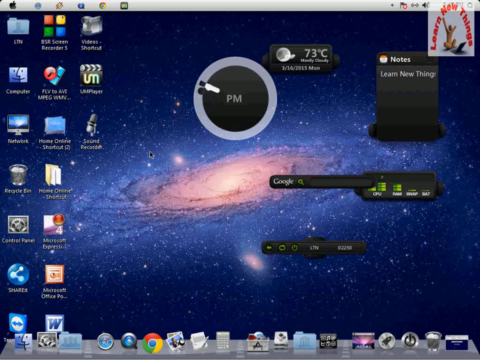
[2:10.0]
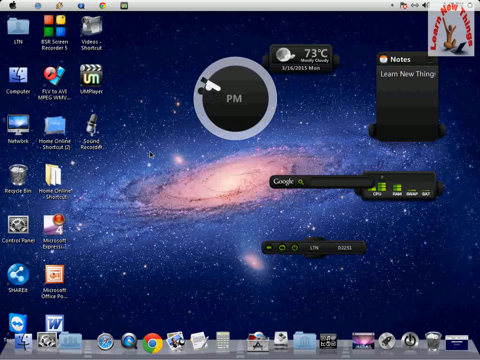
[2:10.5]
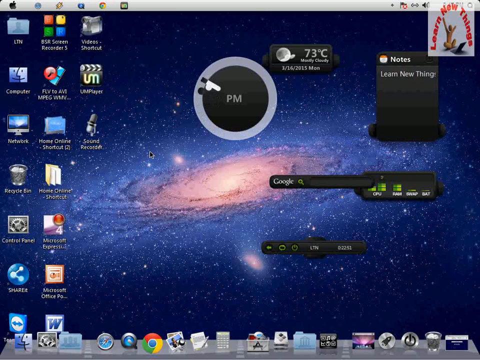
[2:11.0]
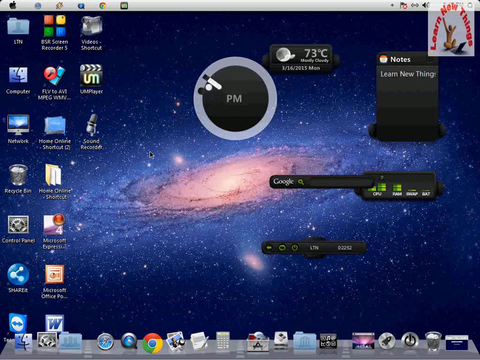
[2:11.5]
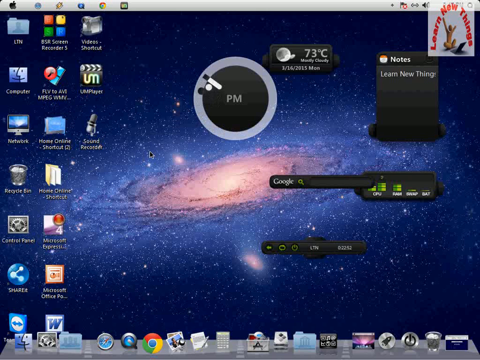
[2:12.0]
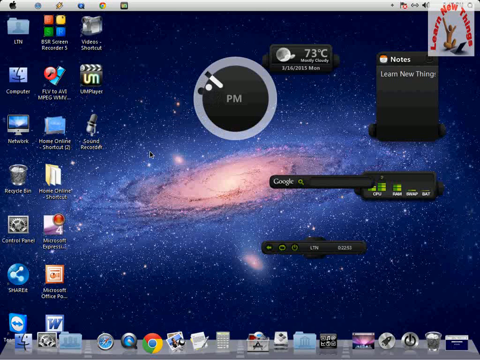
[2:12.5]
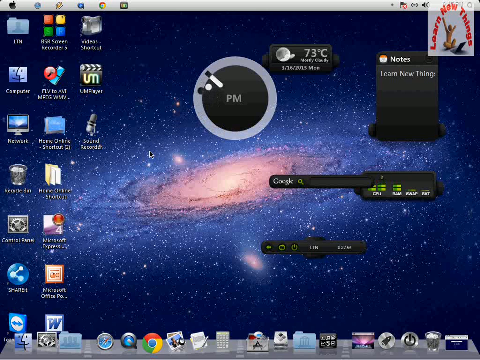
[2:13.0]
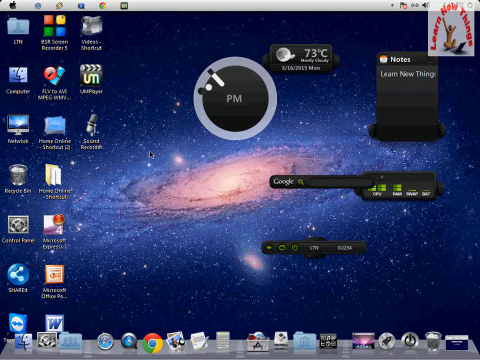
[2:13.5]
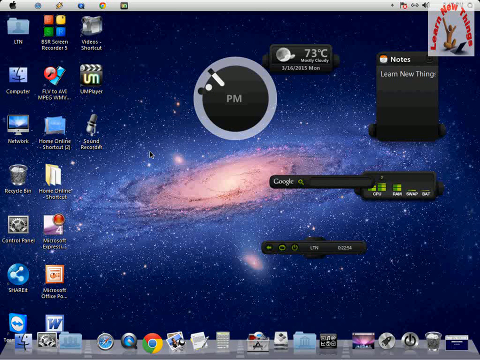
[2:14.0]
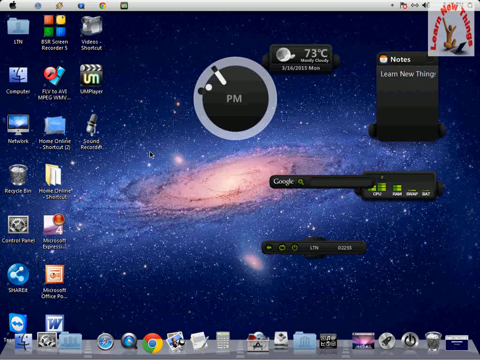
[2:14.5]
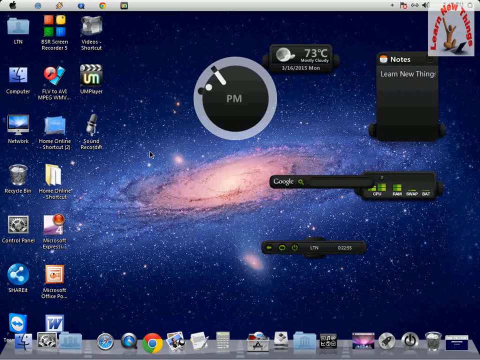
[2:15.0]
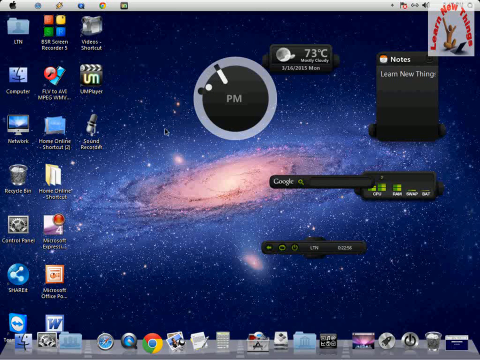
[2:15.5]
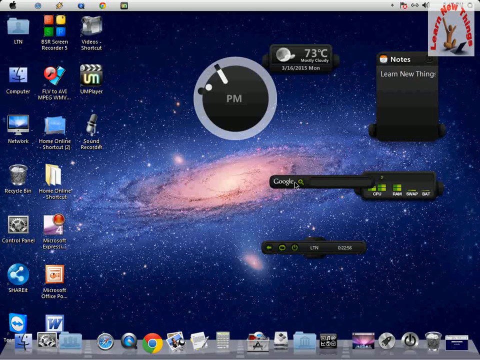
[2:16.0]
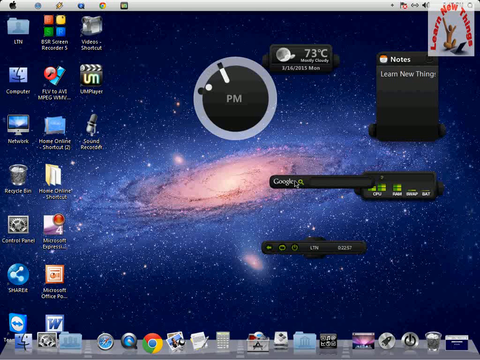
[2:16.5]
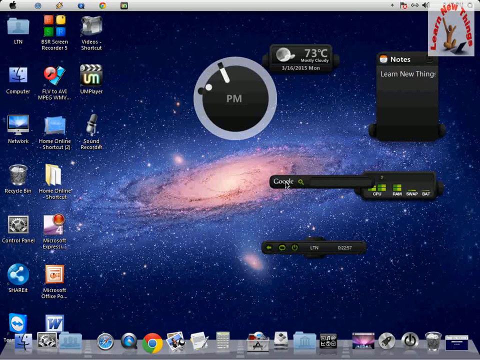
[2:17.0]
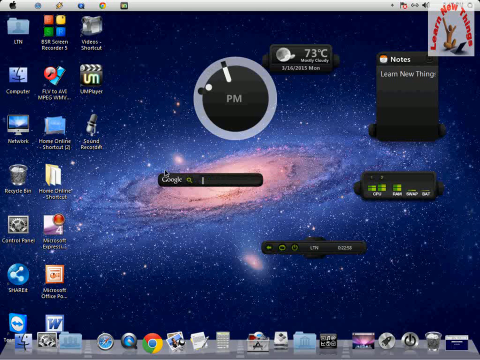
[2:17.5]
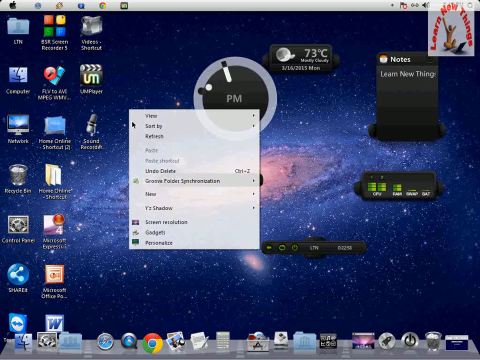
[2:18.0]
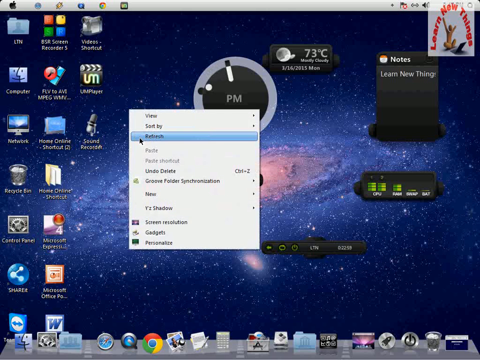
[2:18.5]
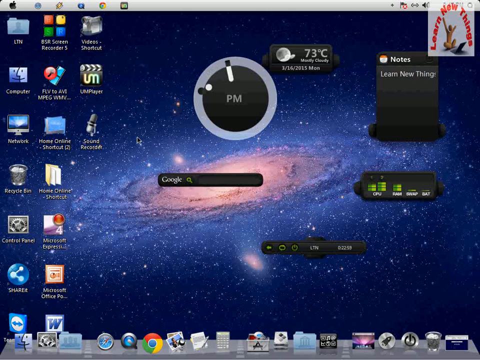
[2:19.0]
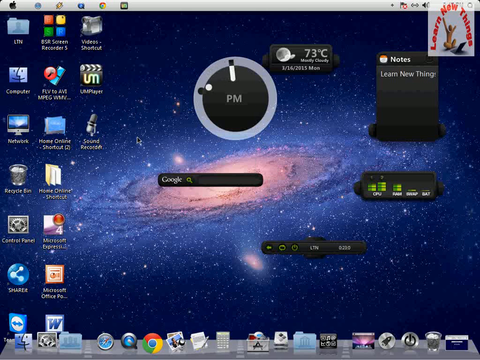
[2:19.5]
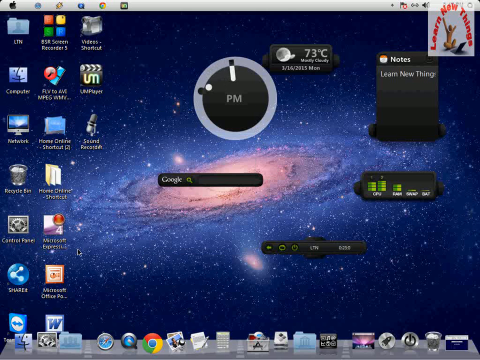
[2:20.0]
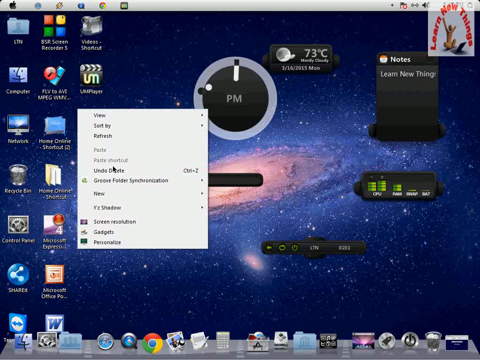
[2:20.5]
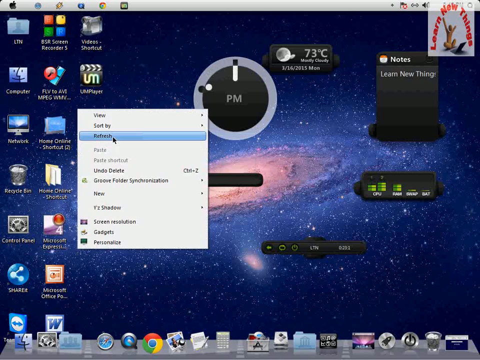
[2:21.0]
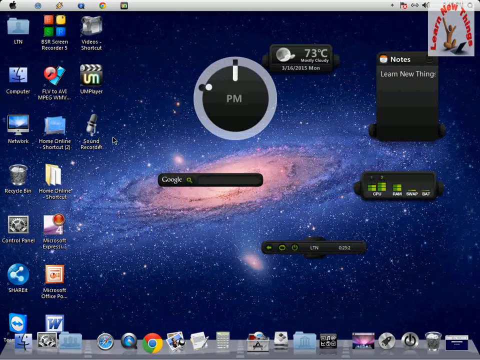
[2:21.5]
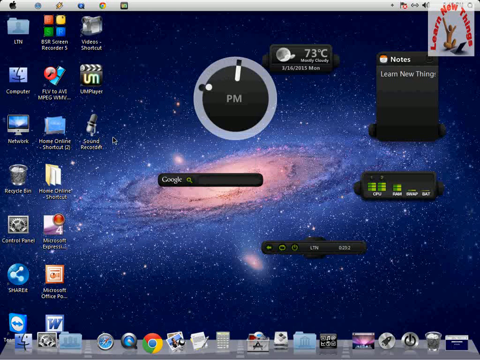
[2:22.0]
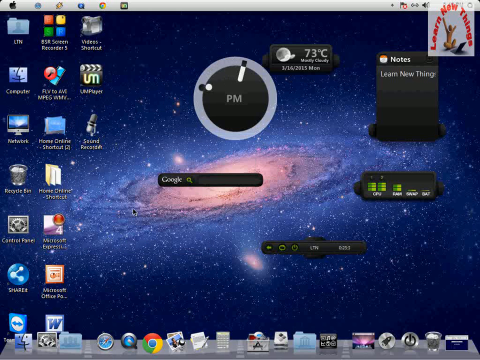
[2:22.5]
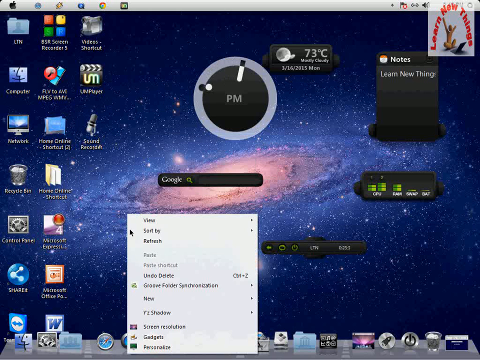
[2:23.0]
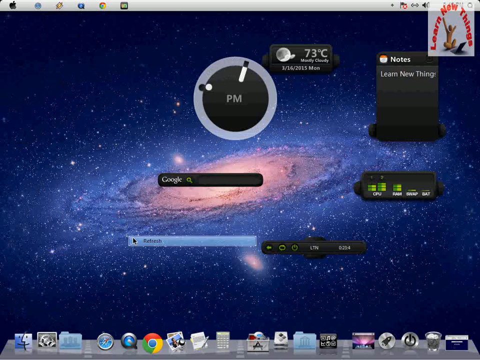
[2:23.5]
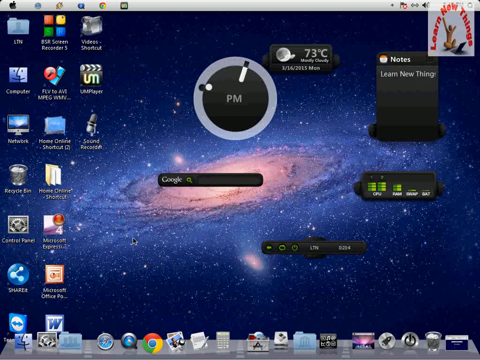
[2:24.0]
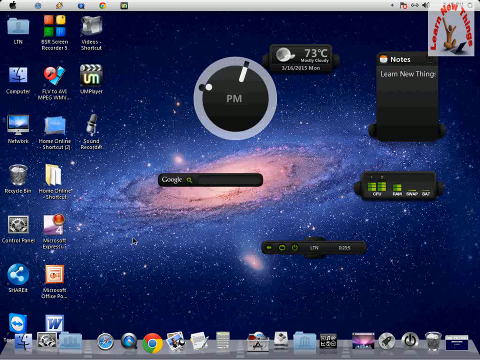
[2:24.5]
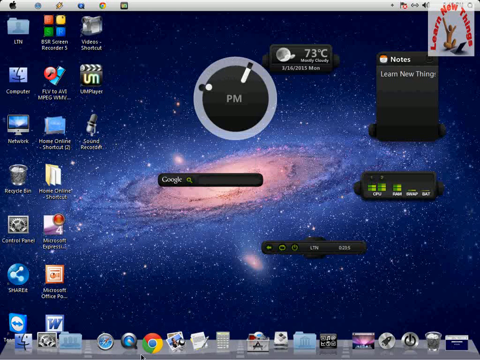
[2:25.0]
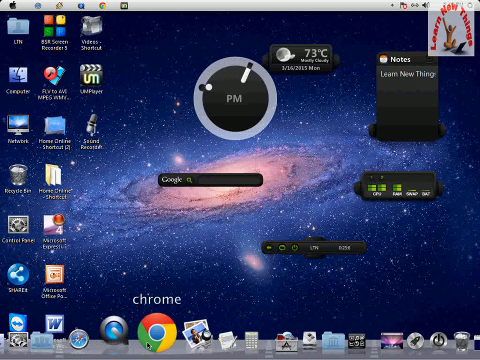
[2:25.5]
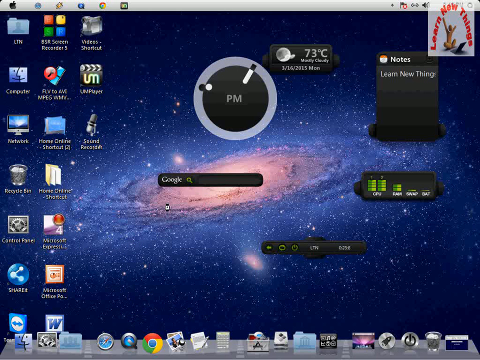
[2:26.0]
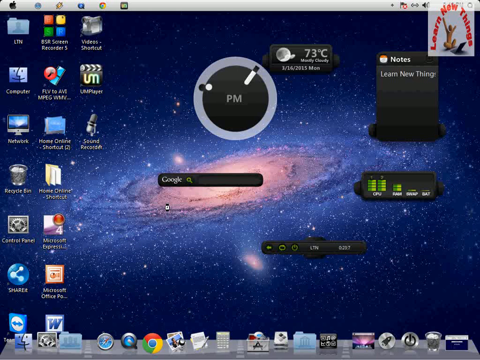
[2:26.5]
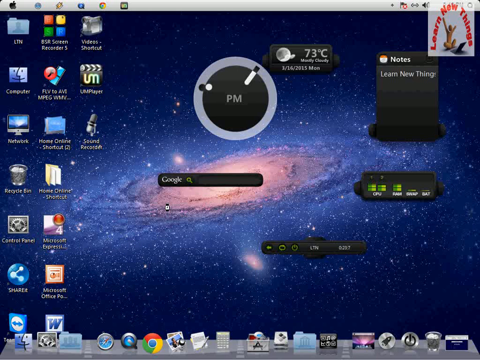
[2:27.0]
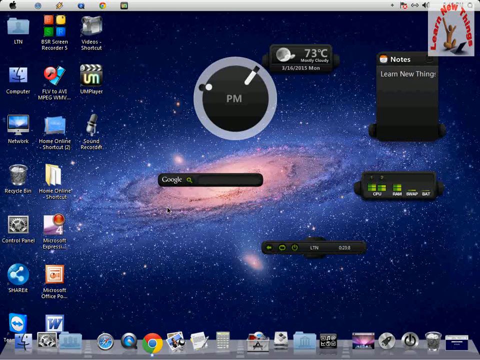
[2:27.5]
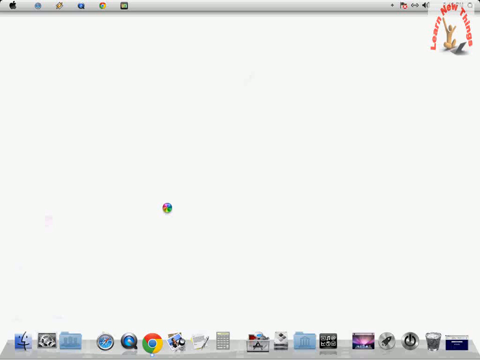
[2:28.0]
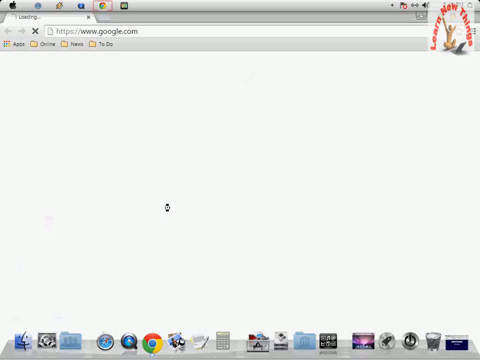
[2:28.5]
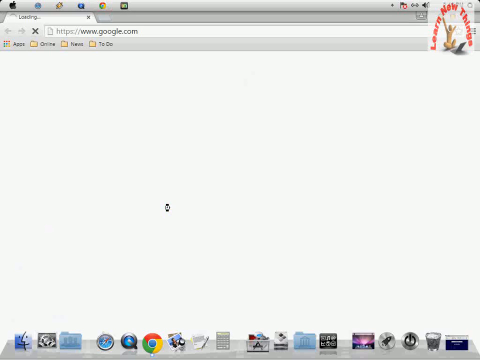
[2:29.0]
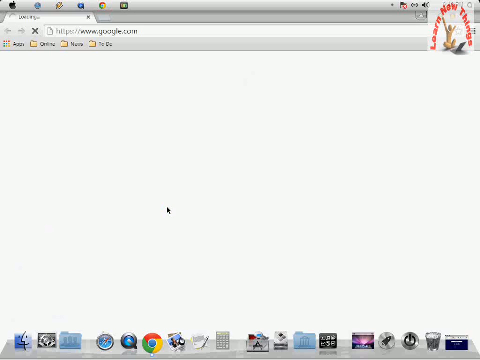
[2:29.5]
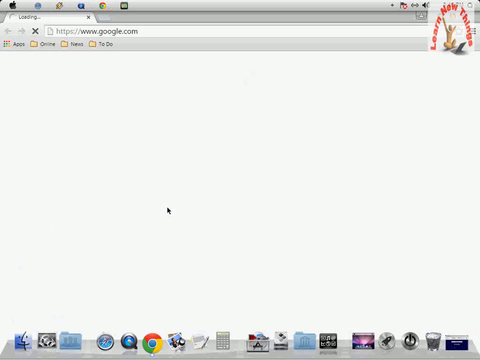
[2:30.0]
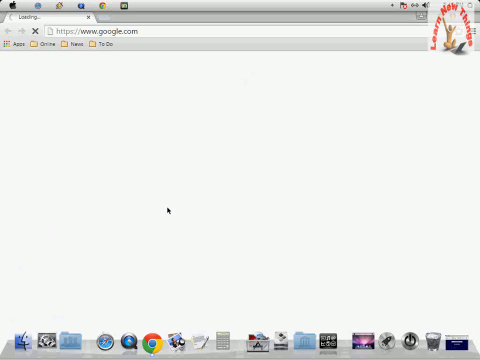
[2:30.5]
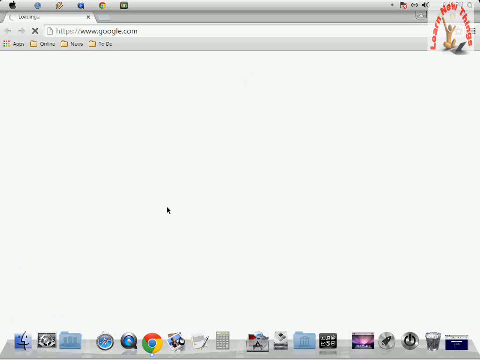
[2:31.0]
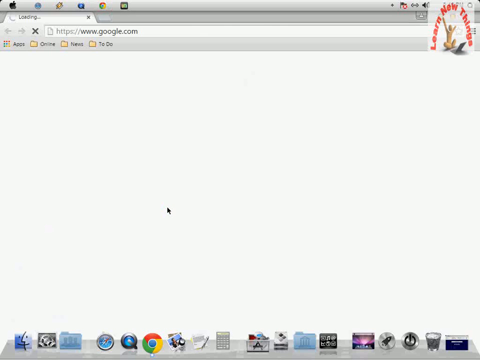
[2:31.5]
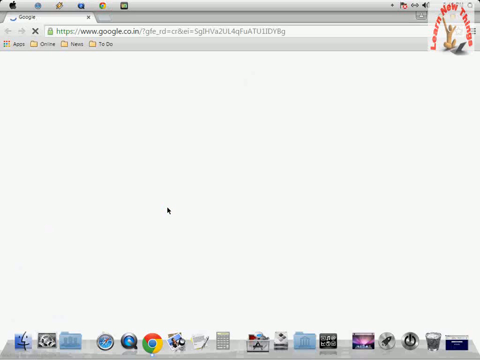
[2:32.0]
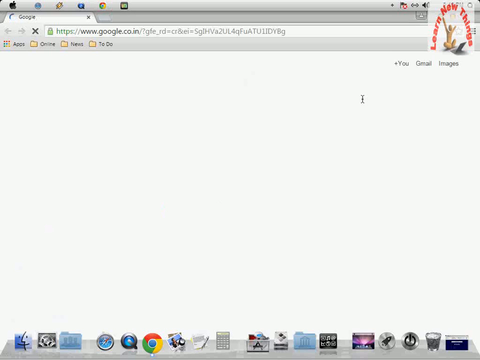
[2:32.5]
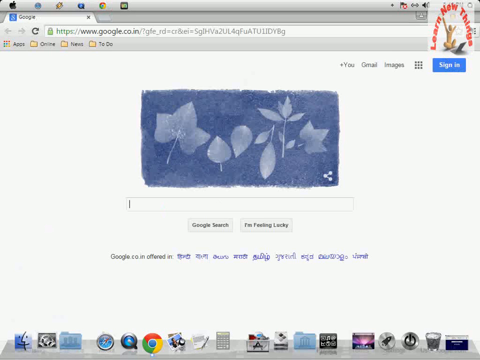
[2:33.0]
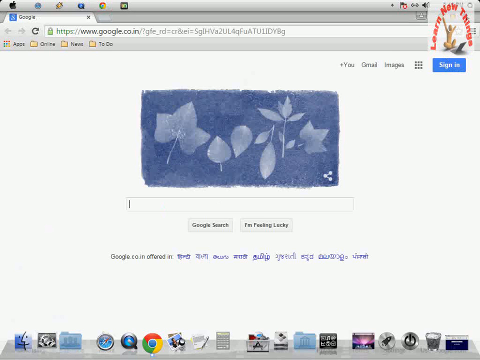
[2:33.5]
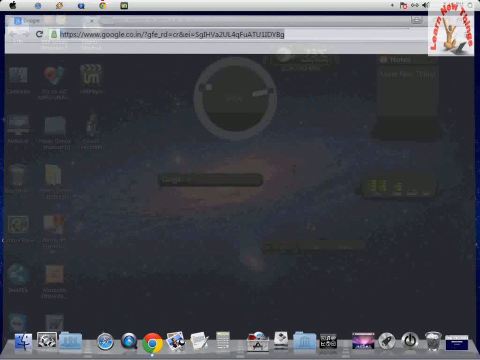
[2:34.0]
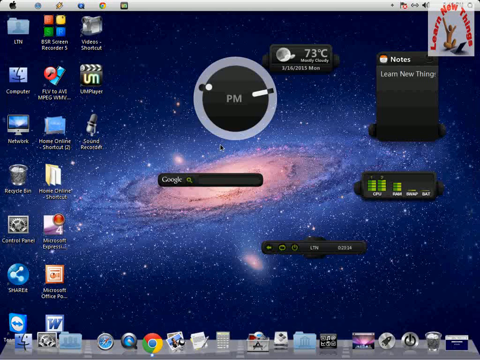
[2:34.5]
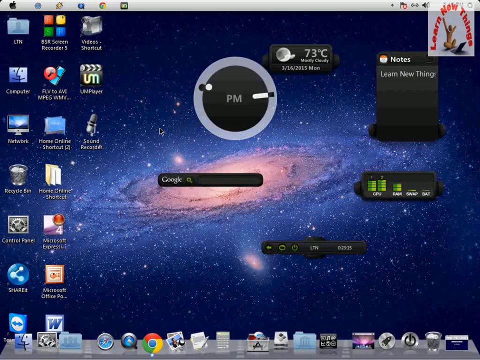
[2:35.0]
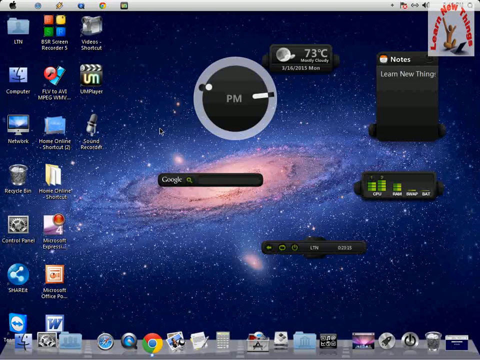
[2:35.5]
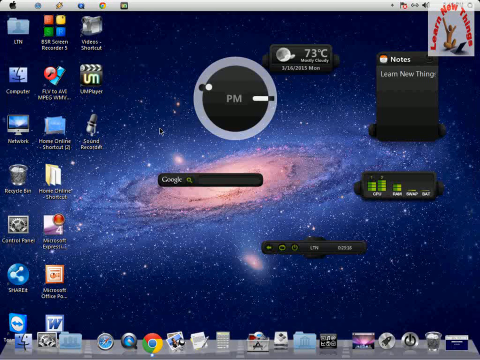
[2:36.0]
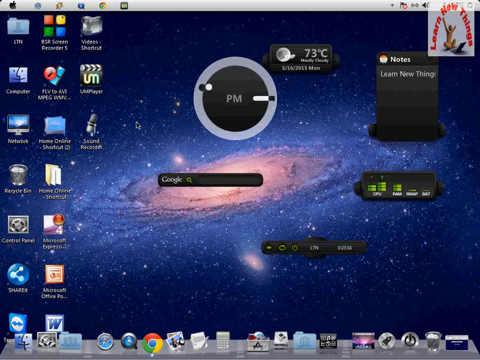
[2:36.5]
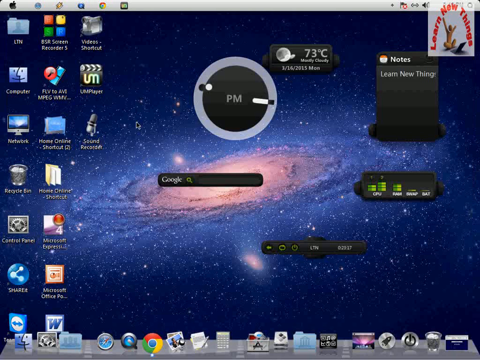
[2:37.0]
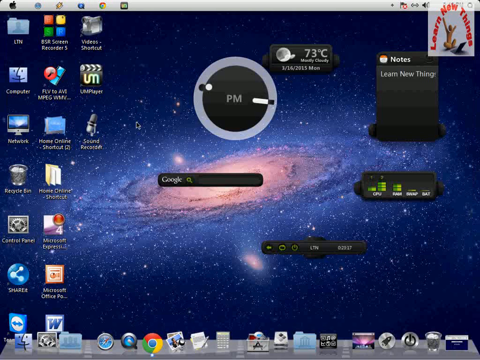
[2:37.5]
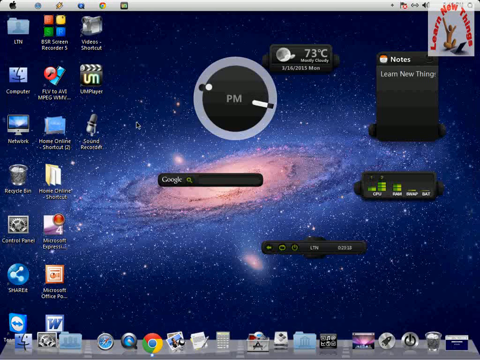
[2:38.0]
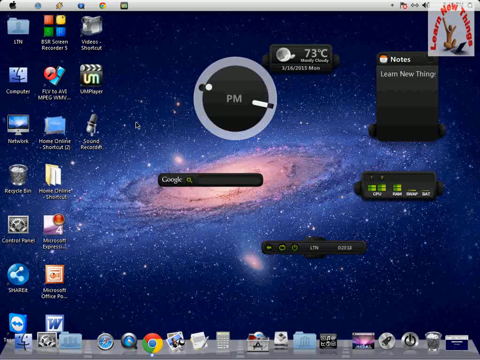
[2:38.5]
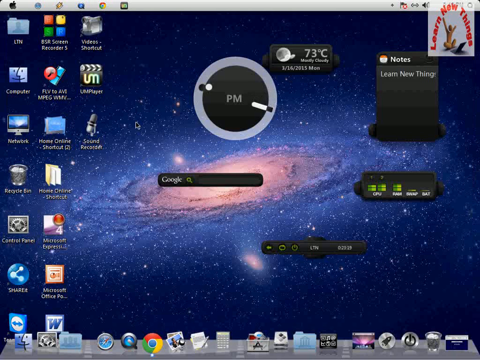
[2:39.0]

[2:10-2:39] The desktop is shown, with the time moved from the right side toward the middle and the temperature reading 73 degrees. All the apps are visible at the bottom, and the background is blue with dots on it. The person looks like they might have clicked on Chrome, and the browser goes to google.com. They do not type anything. The Google page briefly shows an image or video under or in place of the Google logo, barely visible before the person moves on.